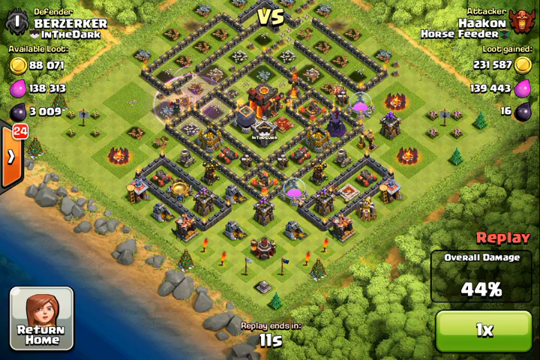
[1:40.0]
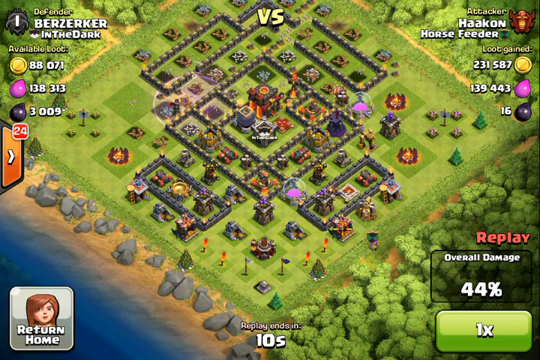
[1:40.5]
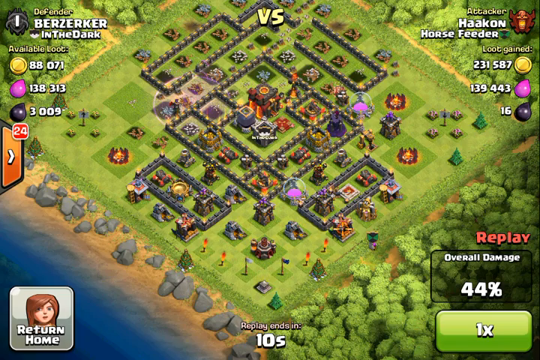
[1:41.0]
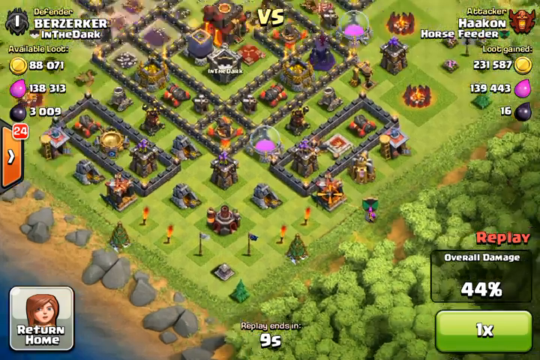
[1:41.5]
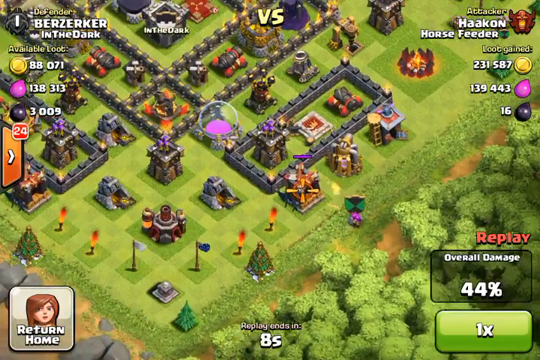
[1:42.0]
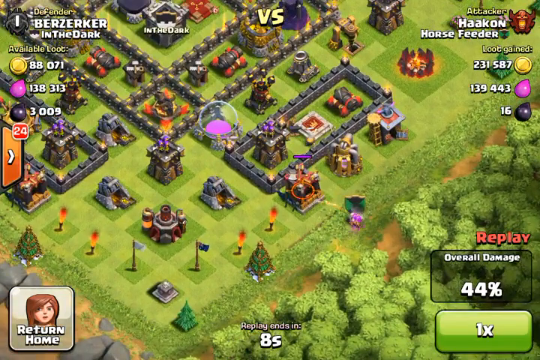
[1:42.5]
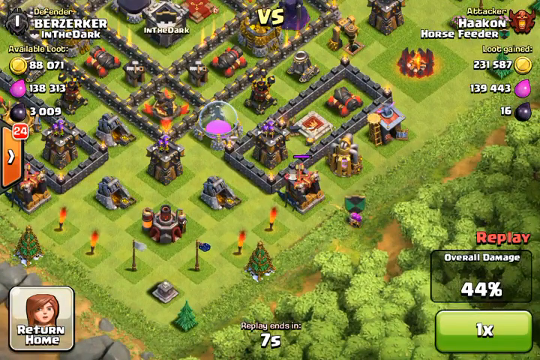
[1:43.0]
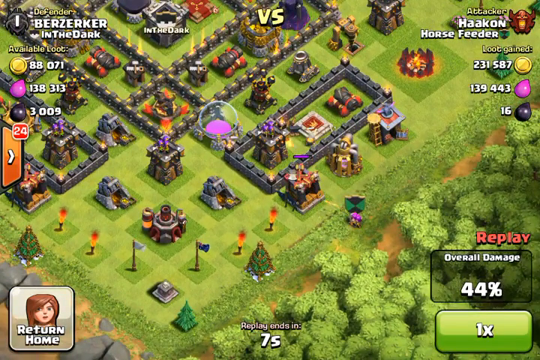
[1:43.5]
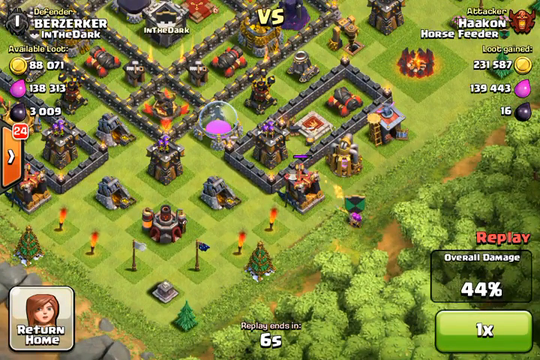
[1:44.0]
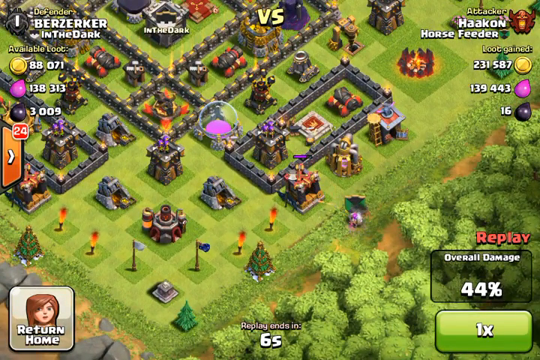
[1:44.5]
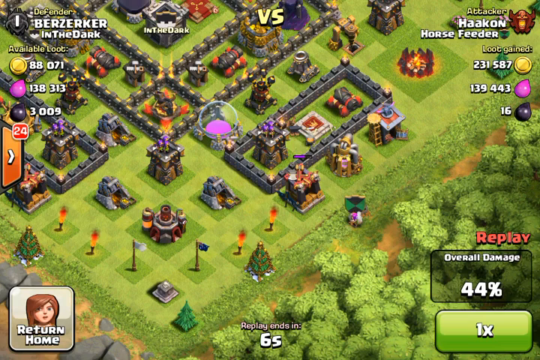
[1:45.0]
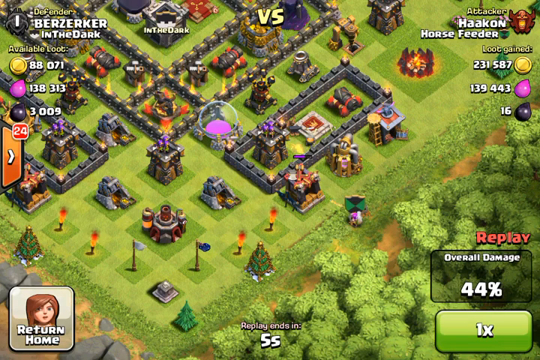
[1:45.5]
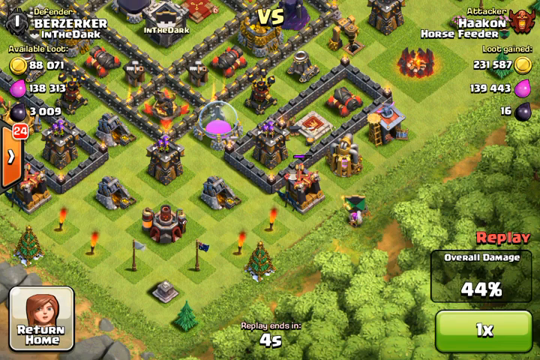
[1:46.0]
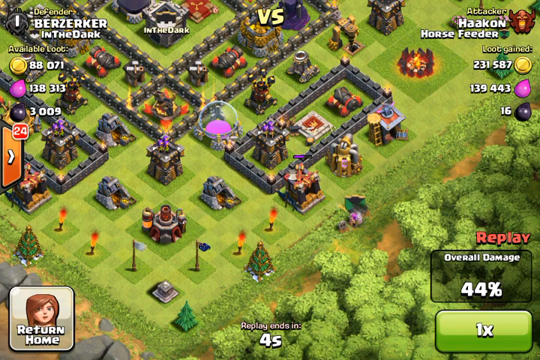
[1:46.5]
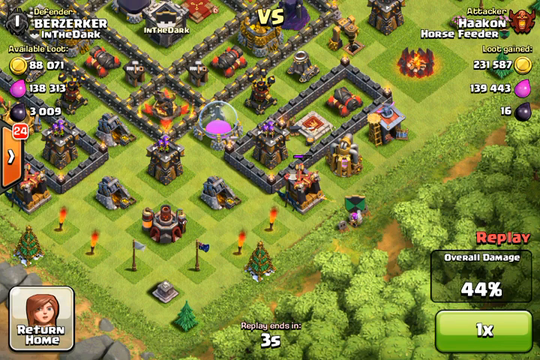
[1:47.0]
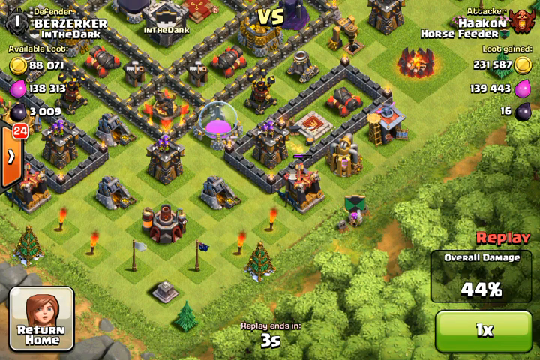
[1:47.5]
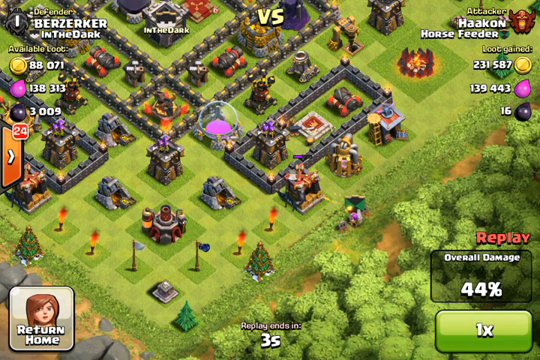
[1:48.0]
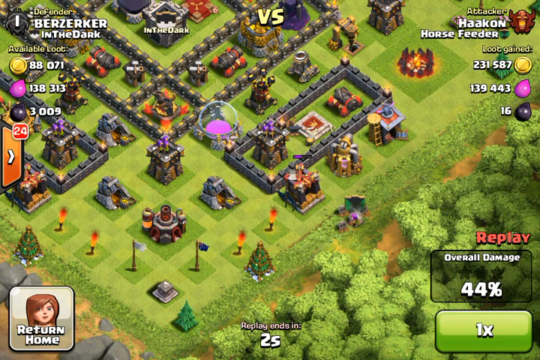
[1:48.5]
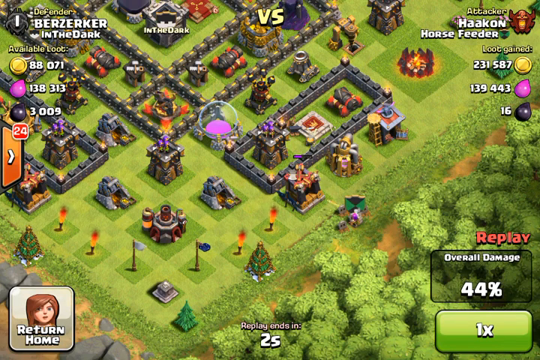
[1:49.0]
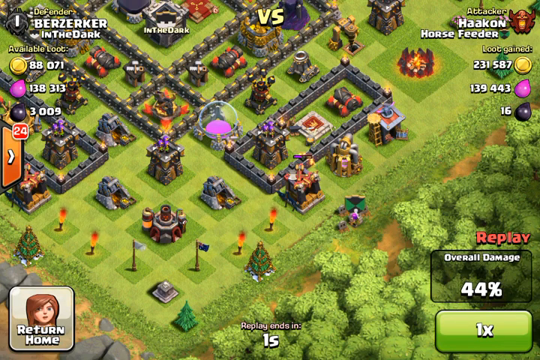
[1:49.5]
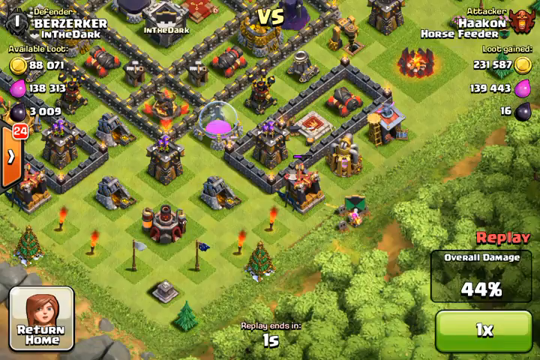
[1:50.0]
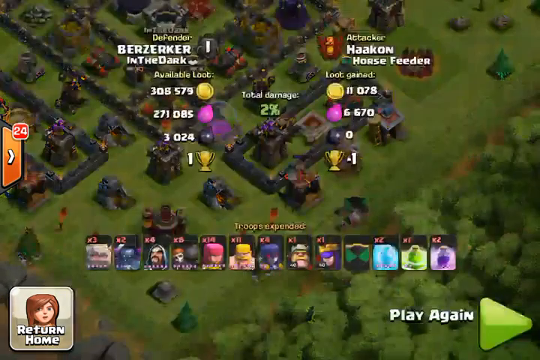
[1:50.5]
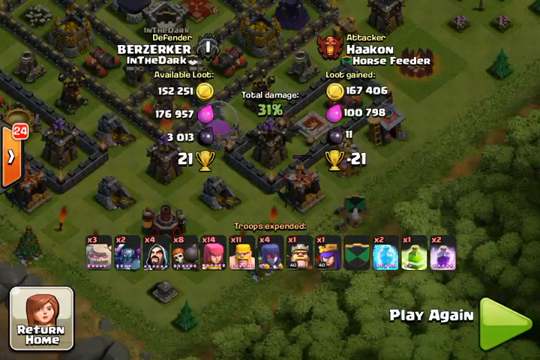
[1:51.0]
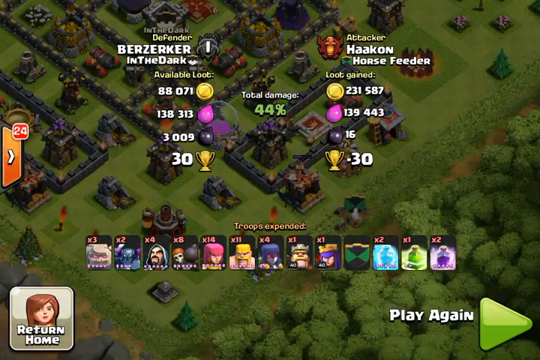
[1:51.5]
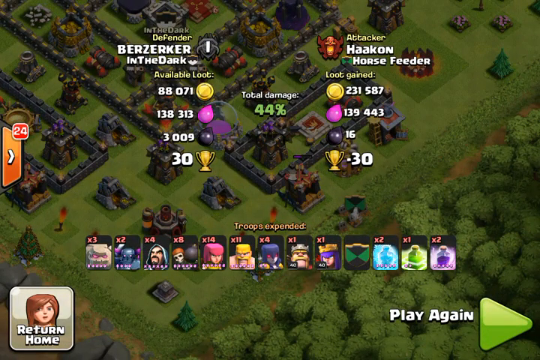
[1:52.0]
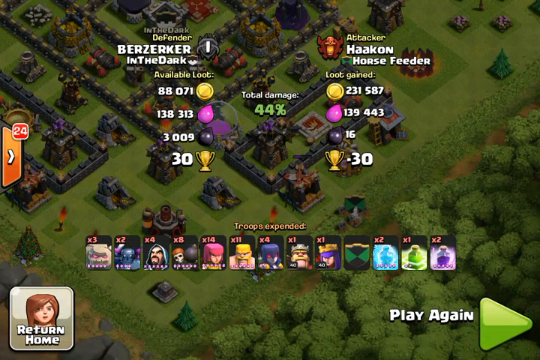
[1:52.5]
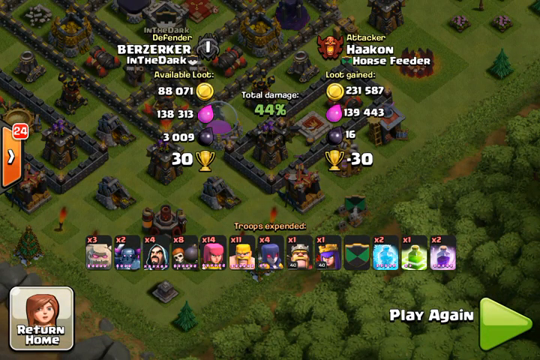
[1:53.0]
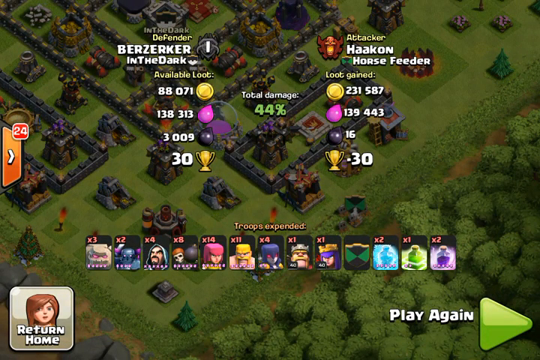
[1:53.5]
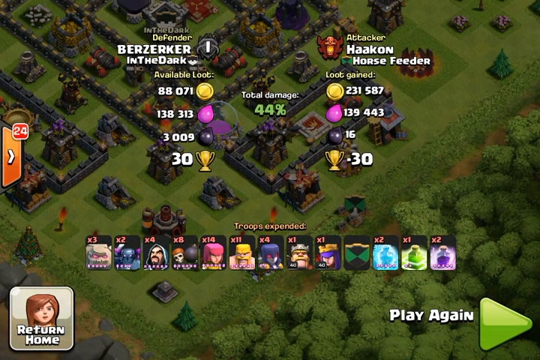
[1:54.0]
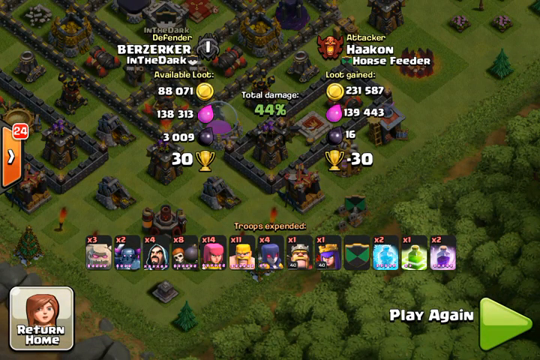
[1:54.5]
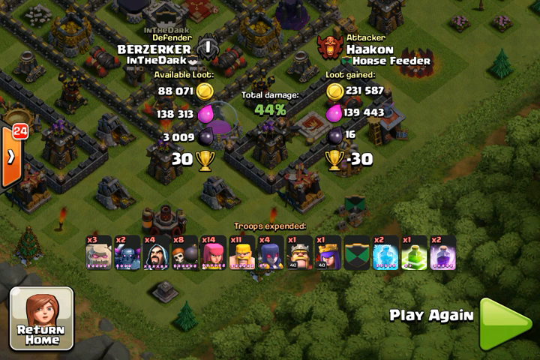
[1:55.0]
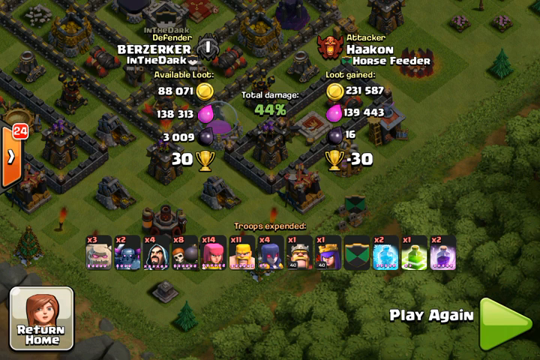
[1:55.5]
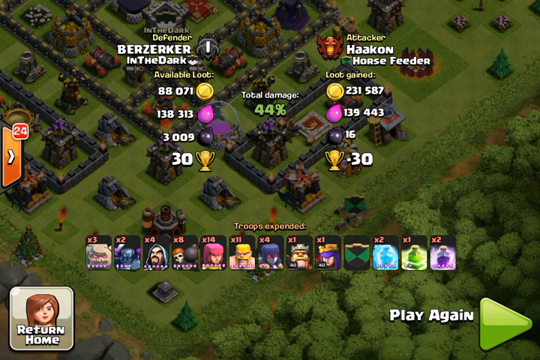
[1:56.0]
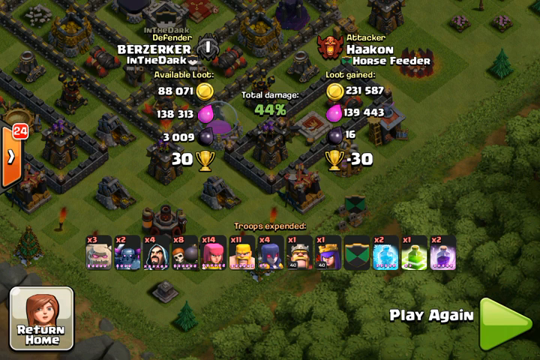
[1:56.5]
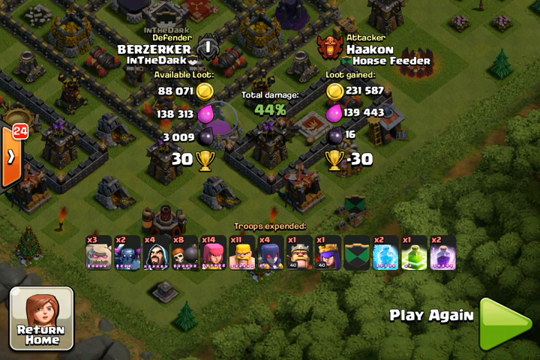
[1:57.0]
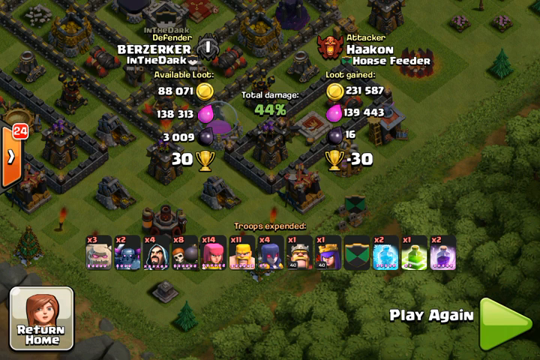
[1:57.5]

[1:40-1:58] The overhead view of the whole battle continues, now showing a bit of the shore, with what looks like a body of water. In the bottom right corner there are a bunch of forests. The view zooms in on certain characters; one has a shield bearing the banner of what seems to be the attacker. They are grouped in a small group of two to three, or possibly more, and are being bombarded somewhat by the city. The screen then moves to a different screen showing the total damage, with a bunch of characters at the bottom, possibly NPCs used for their skills.